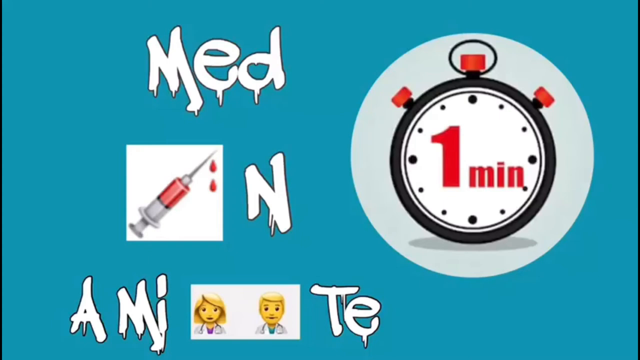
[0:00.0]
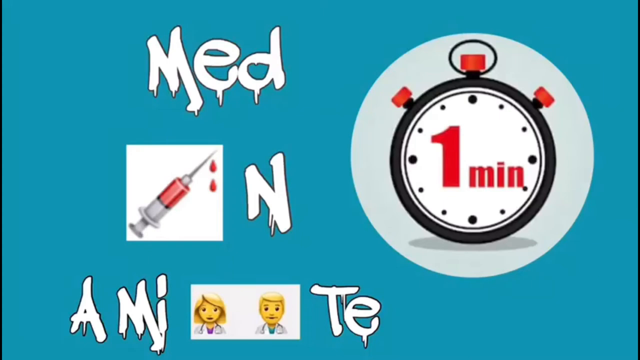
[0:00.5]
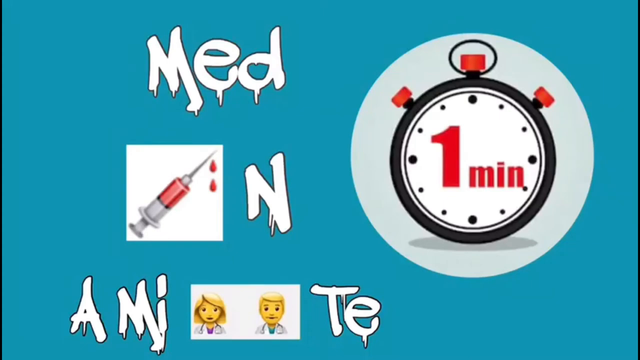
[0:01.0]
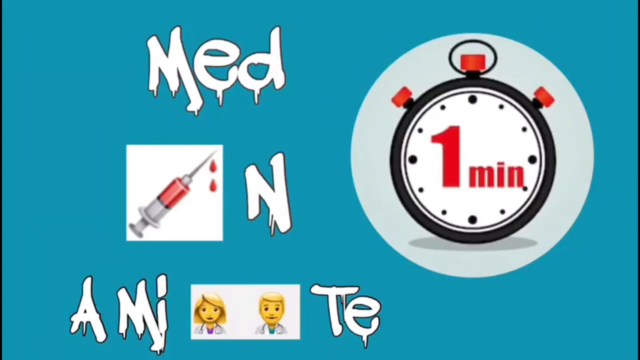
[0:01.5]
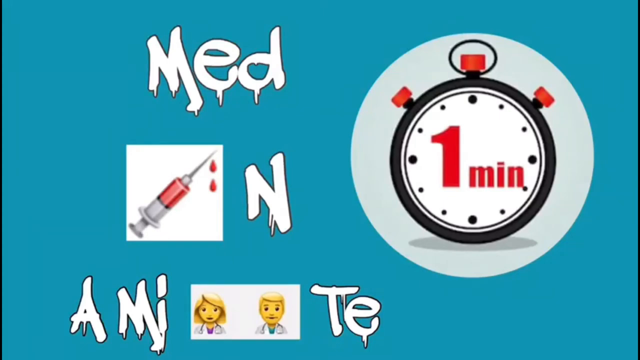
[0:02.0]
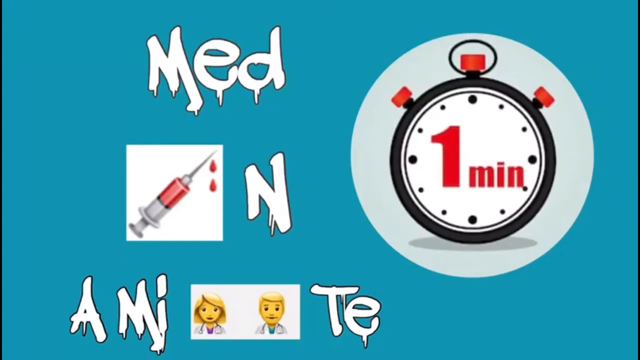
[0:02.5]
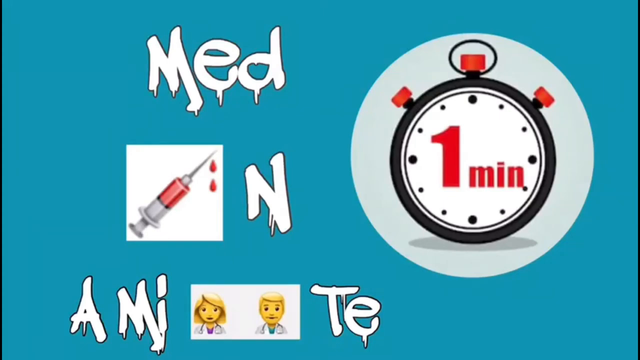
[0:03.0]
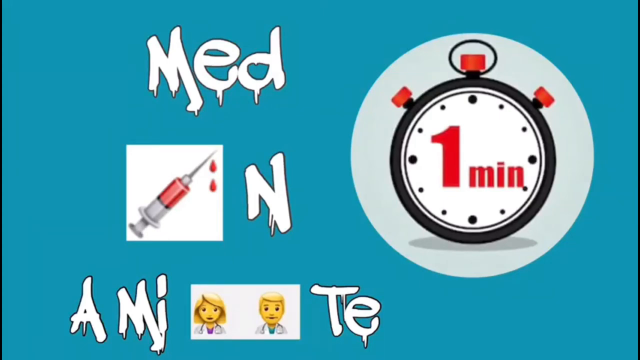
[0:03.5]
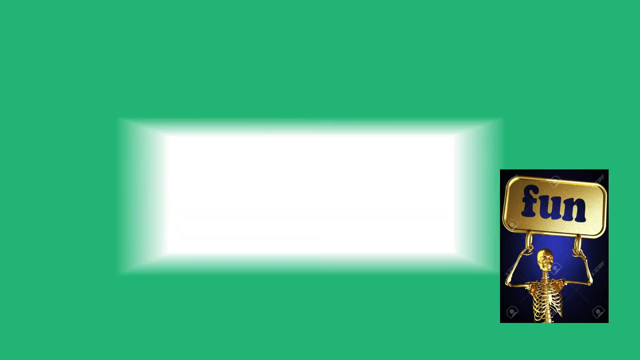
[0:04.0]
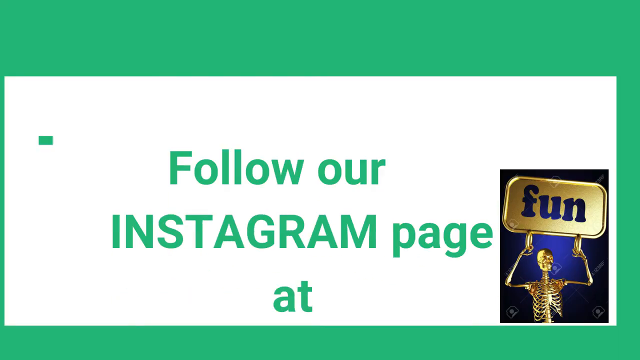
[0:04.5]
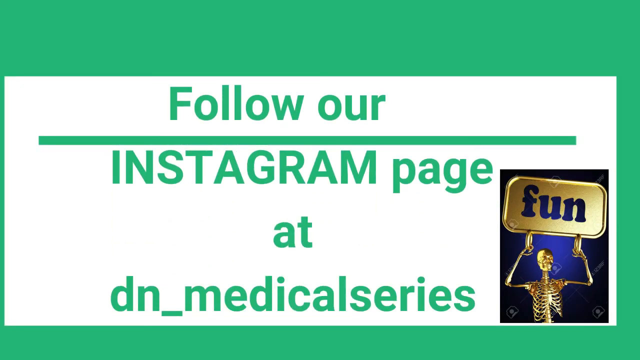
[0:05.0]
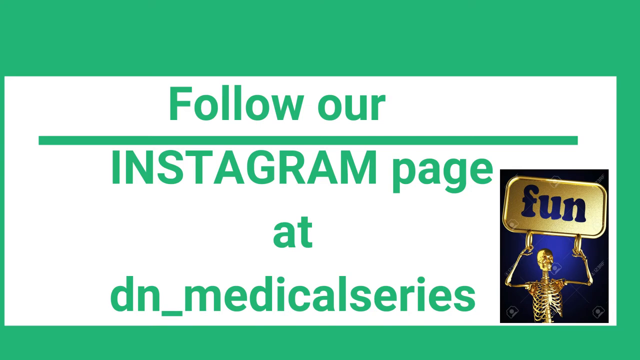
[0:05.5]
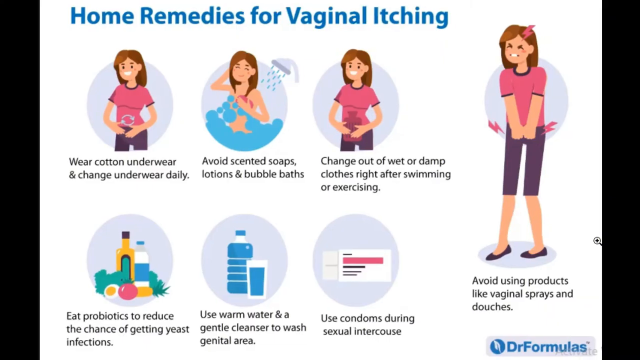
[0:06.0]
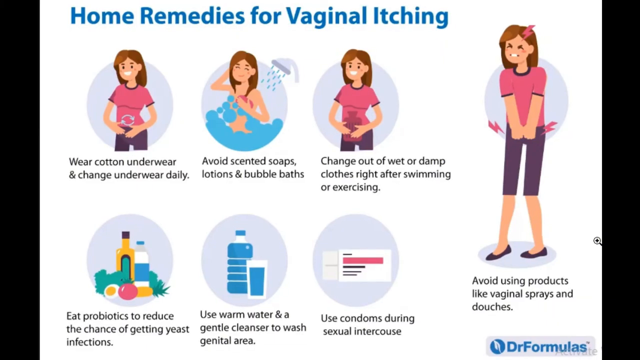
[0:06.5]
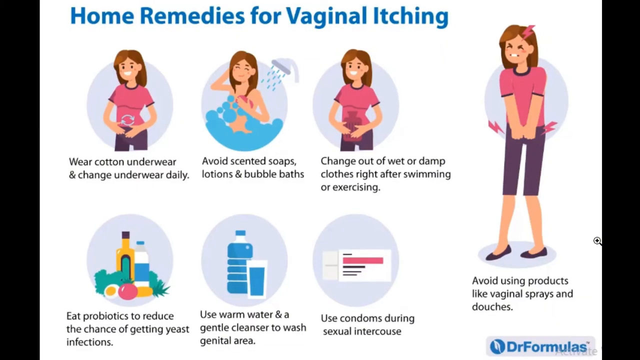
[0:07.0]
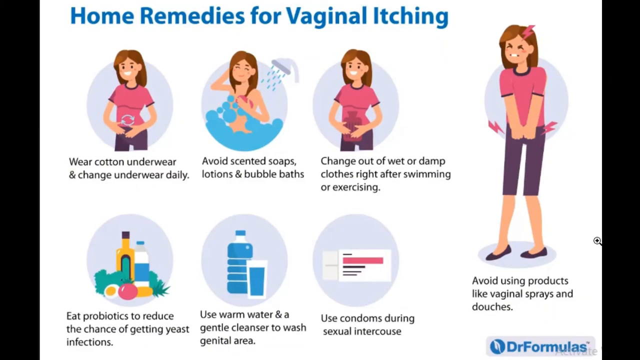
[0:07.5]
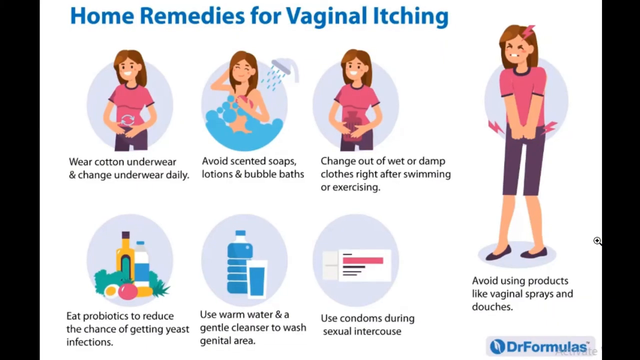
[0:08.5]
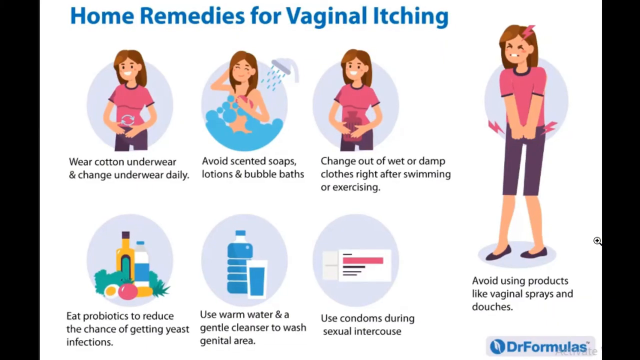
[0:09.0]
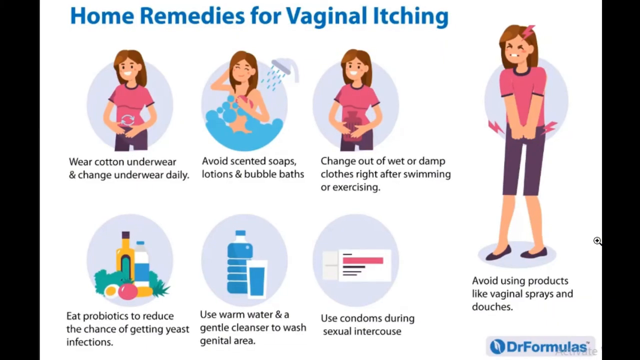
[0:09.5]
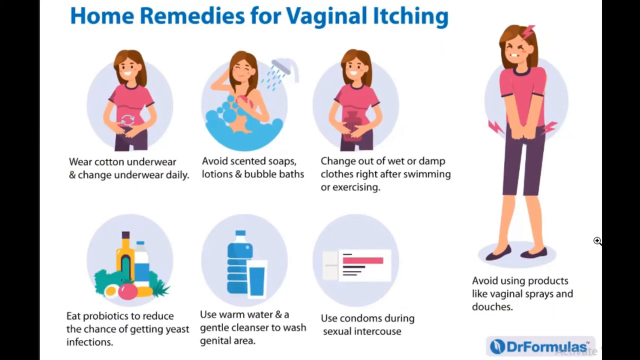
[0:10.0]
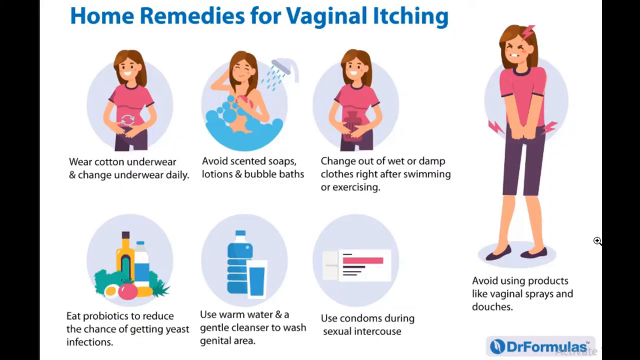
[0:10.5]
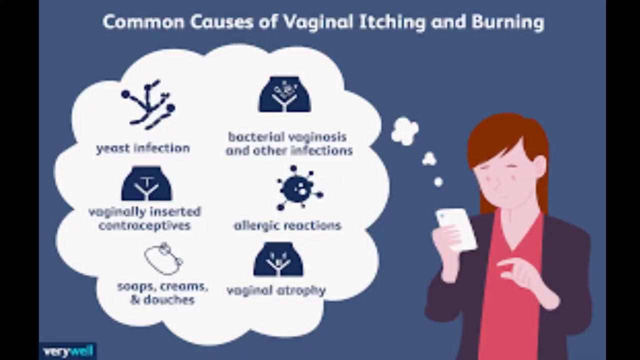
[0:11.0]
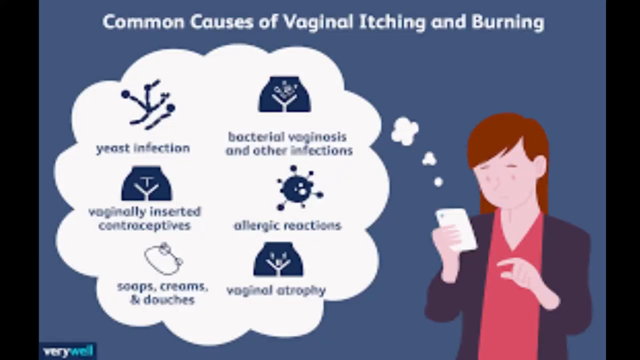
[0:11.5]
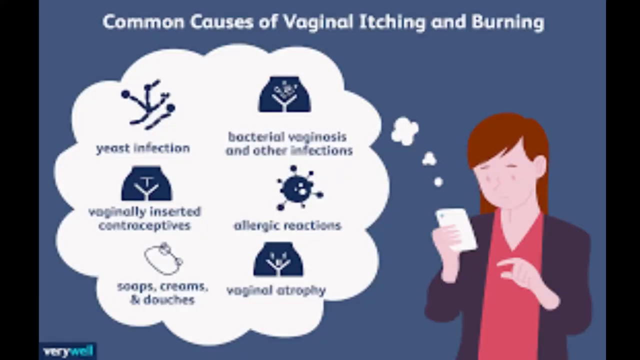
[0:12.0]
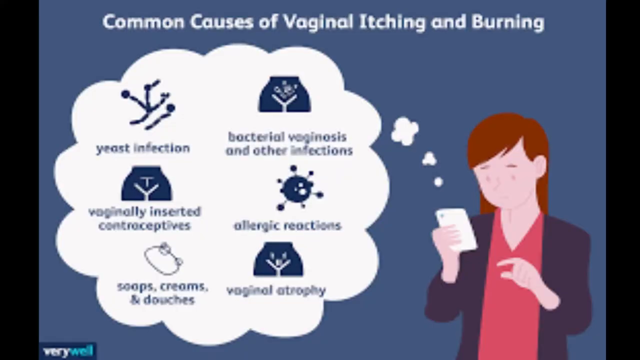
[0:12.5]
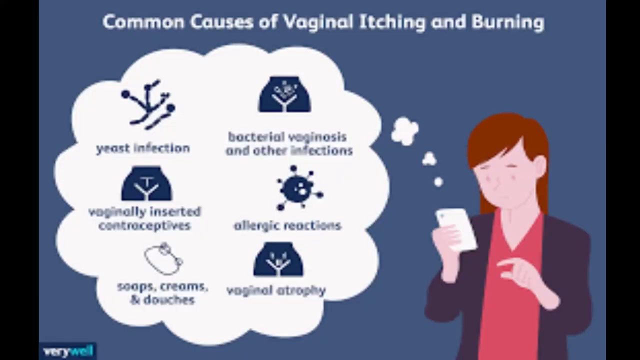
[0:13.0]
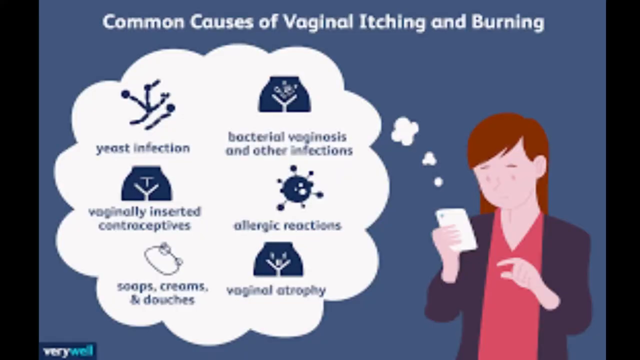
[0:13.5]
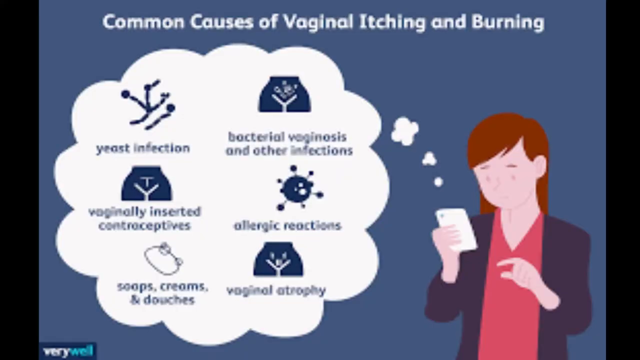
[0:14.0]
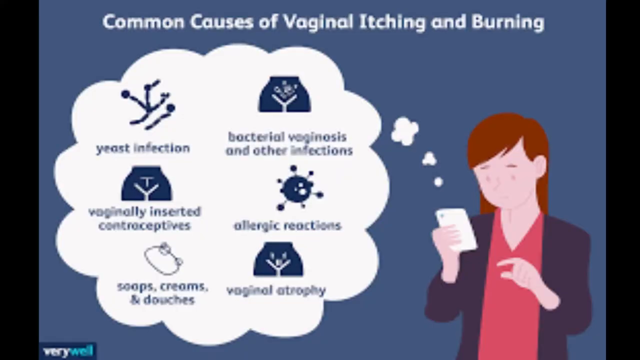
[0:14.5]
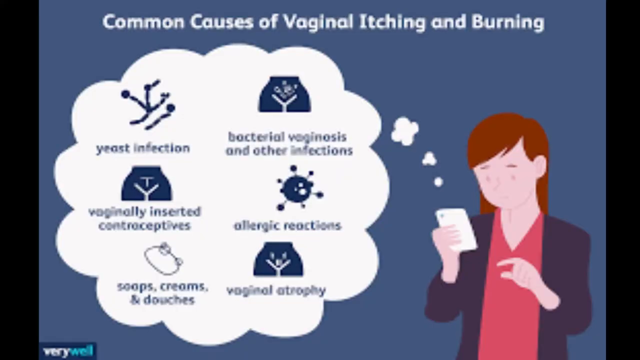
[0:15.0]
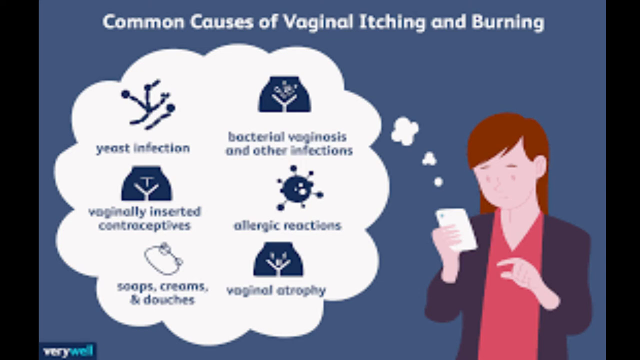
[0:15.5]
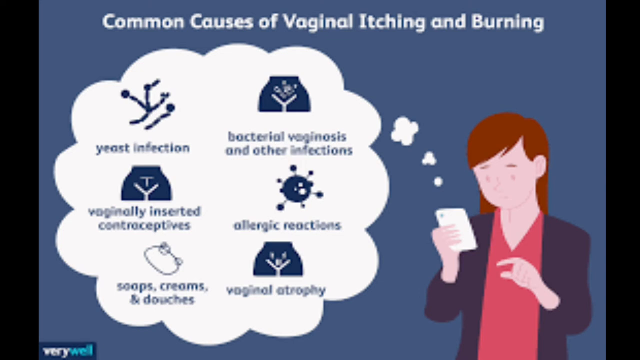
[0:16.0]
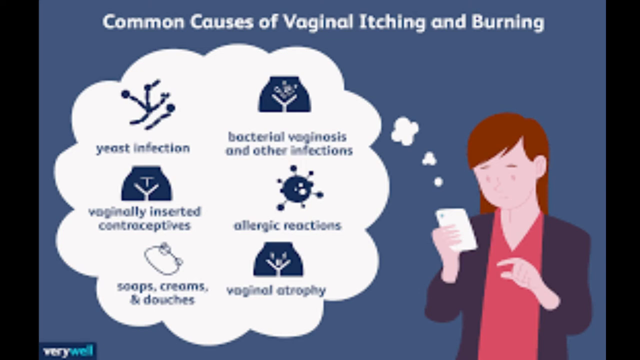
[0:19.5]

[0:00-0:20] A dark teal blue background shows the word "med" in white lettering. Directly below is a white box containing a syringe filled with red liquid that appears to be the color of blood, and further down are a couple of common emojis: a woman emoji and a man emoji. On the right side of the screen, a dark gray circle appears, encompassing a black and white clock that says "one minute" in red text, with black dots outlining the clock. It looks to be a stopwatch, with timers on each side that have red and black pins. The video then moves to another screen about following the Instagram page, highlighted in green text, before moving on to the next slide.